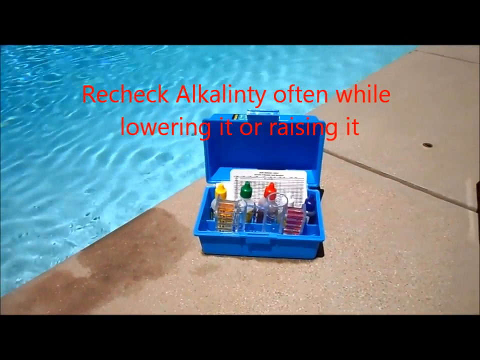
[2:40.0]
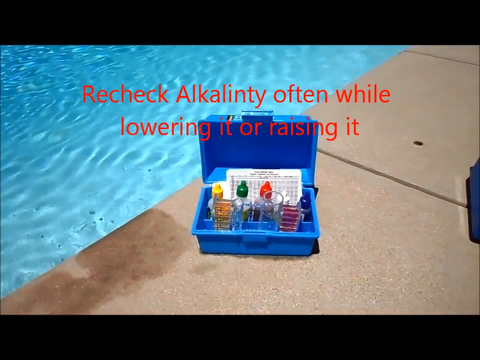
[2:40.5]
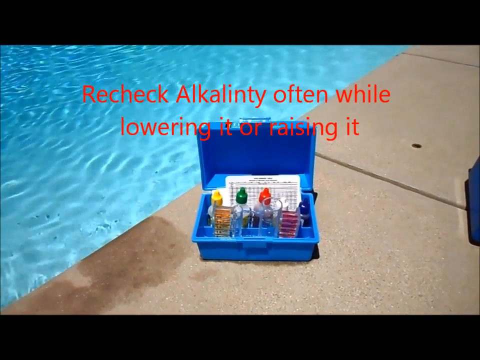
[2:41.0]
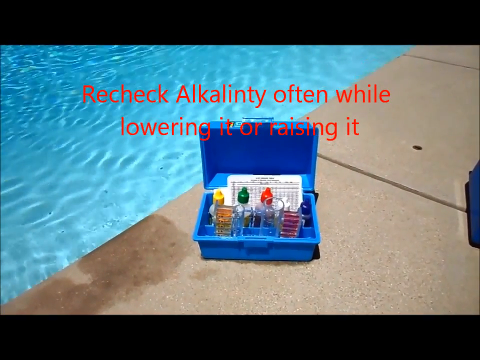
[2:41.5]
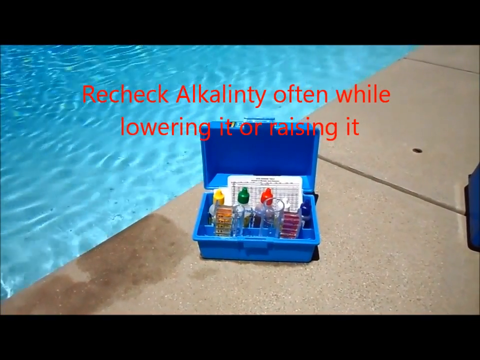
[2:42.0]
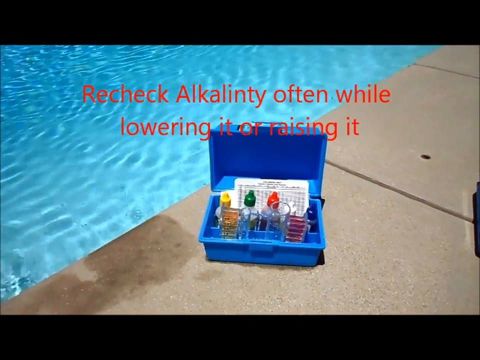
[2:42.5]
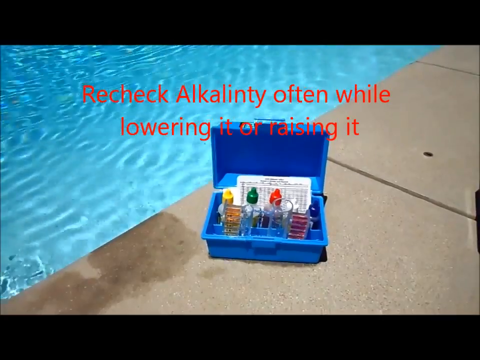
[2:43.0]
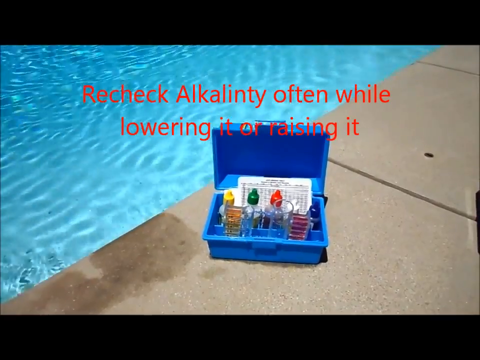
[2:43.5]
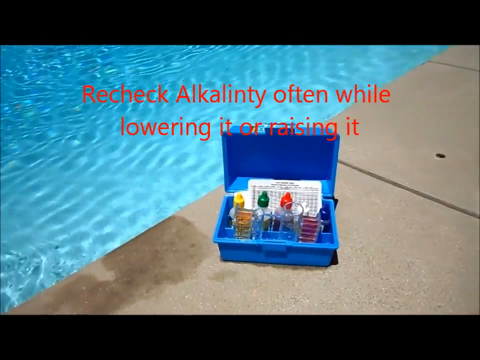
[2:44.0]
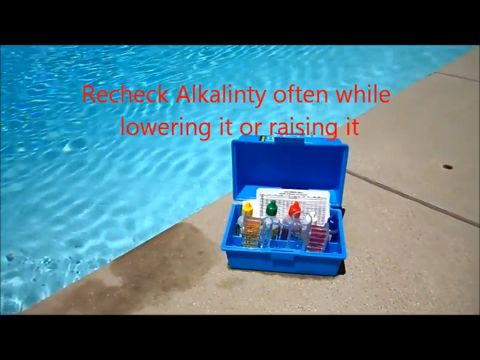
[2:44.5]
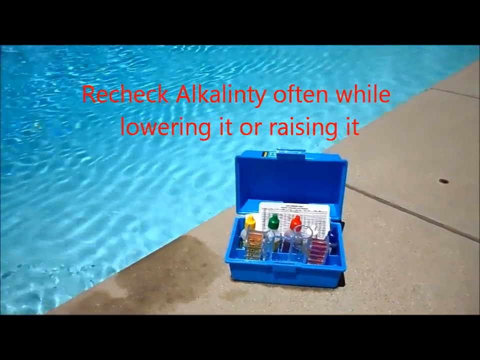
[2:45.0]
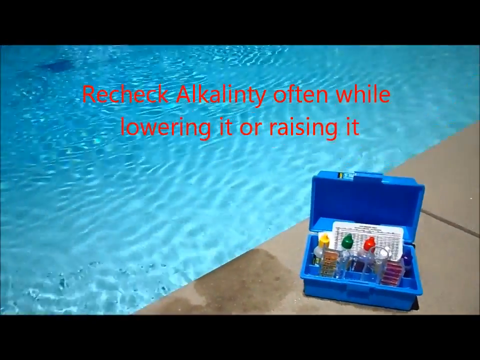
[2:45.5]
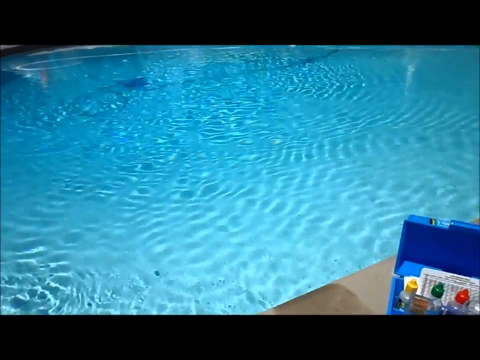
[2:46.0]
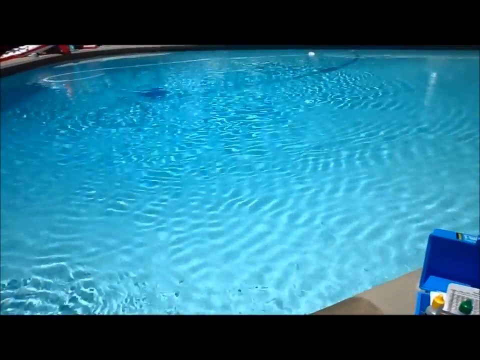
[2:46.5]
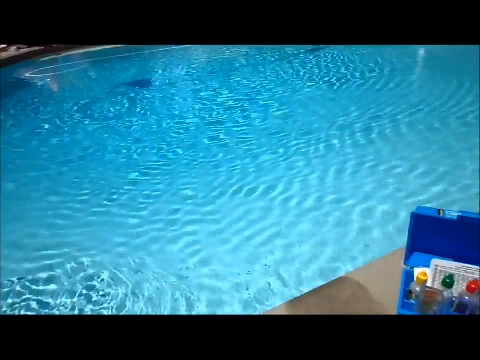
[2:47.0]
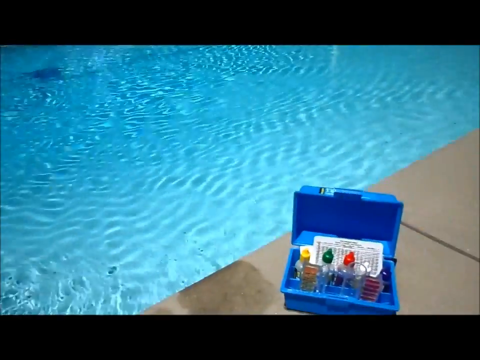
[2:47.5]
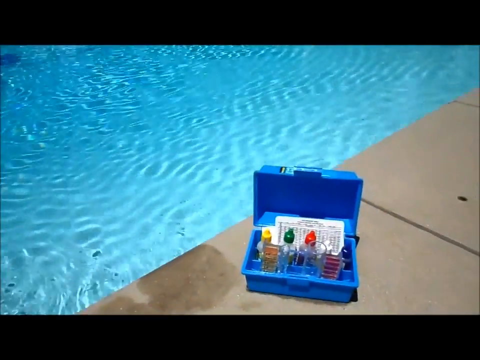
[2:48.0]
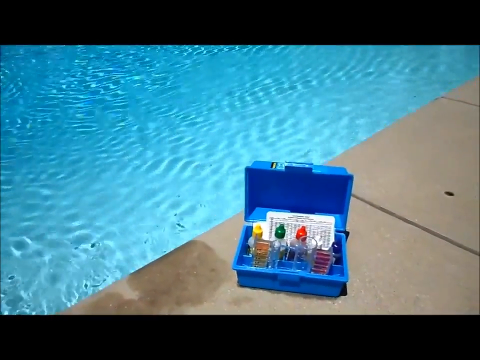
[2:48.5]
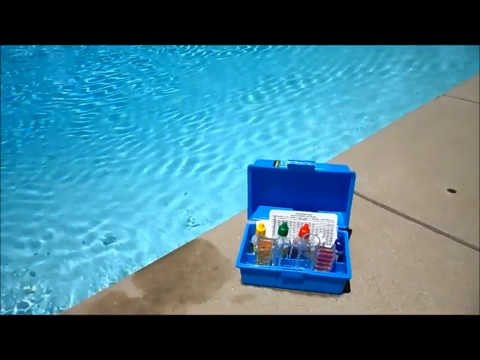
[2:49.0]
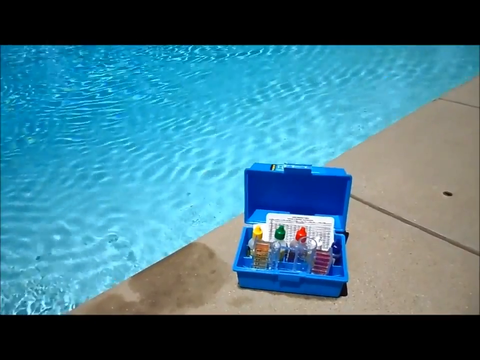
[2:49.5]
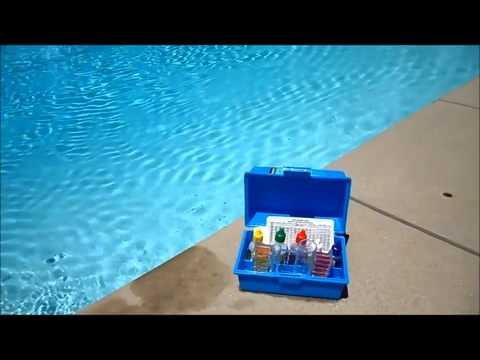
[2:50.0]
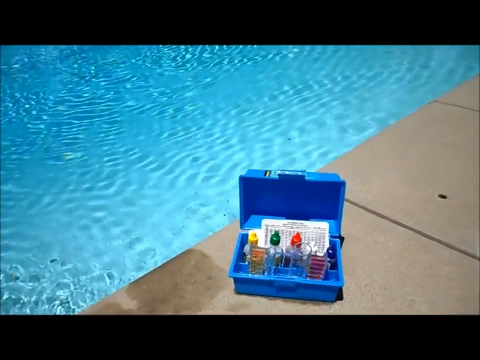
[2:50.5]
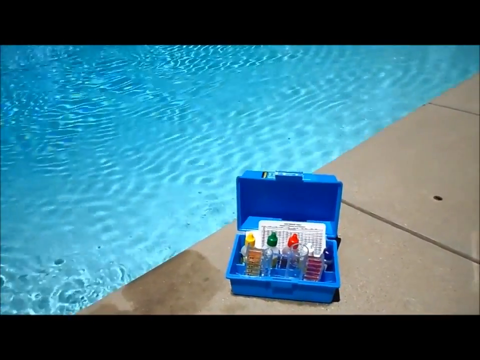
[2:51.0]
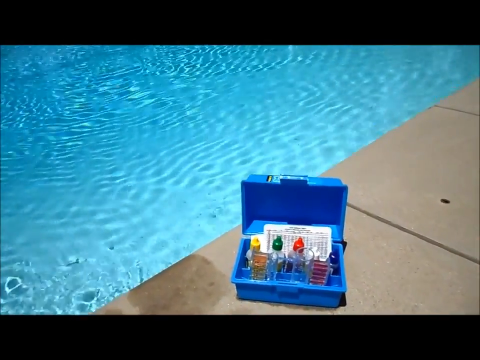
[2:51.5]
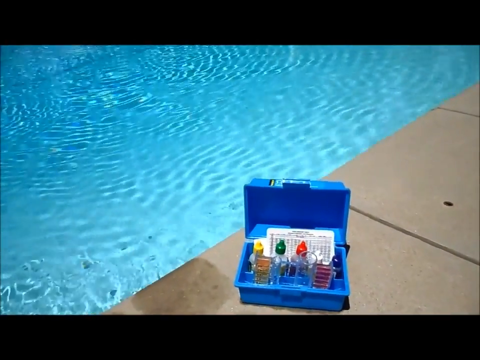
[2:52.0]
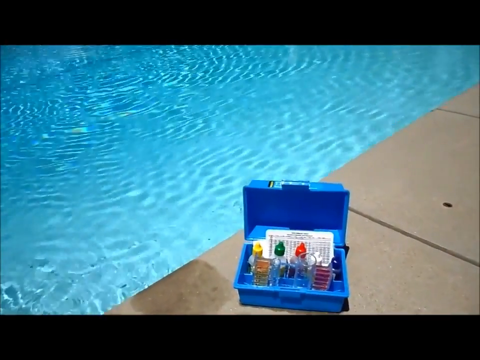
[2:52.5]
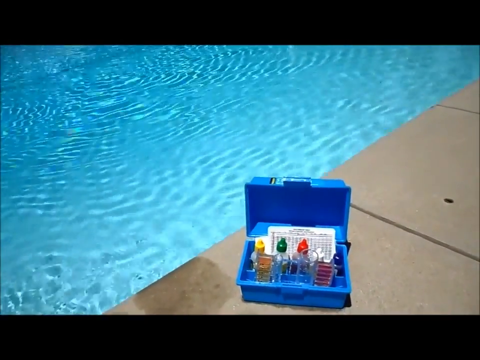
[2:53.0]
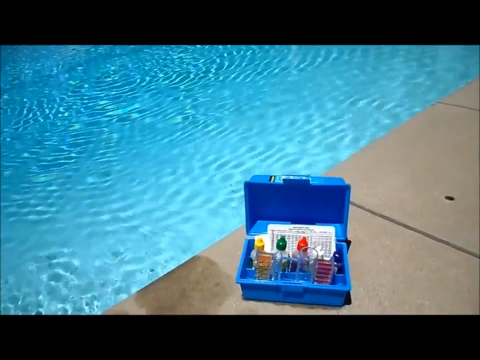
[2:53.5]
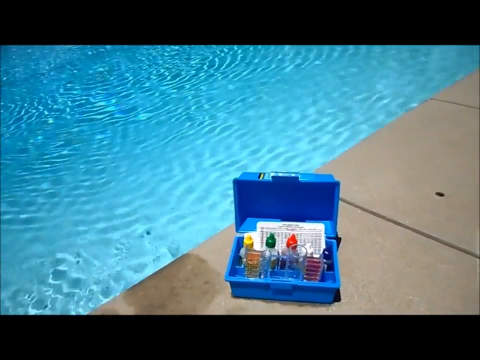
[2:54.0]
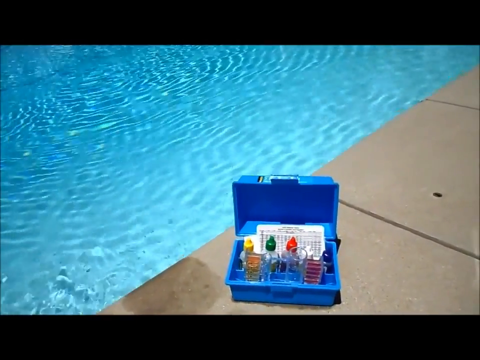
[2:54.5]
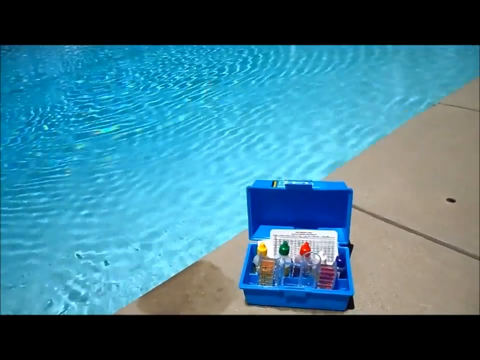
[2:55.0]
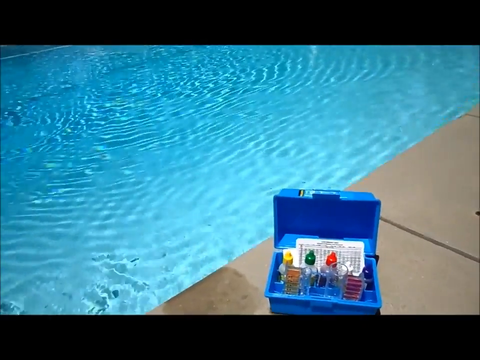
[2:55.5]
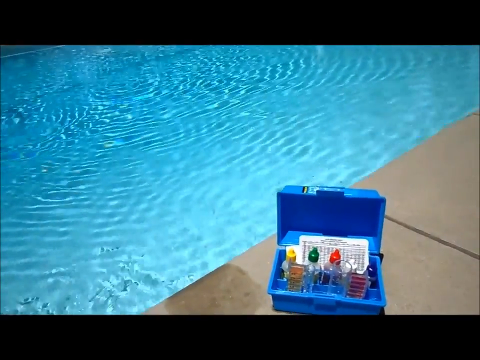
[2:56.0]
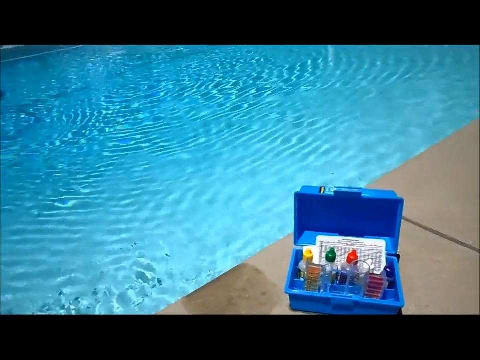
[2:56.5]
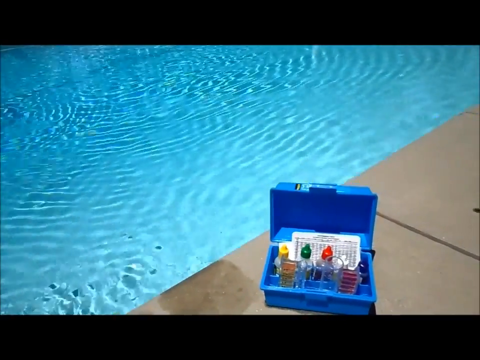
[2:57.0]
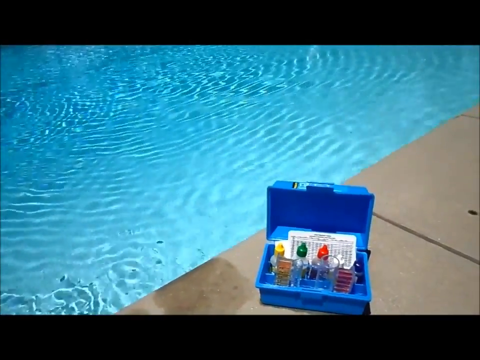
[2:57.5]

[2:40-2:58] The blue box with all the different chemicals in it is shown, with red words on the screen saying to recheck alkalinity often while lowering or raising it. The camera pans off to the left, showing a little more of the pool and briefly the hose, then comes back to the blue box. The box is next to the pool, and there are signs of water up on the deck. The open box holds what look like four bottles, with yellow, green, red and white caps. Behind the bottles is a card, likely with information on it, and there also looks to be some type of clear tube in front of one of the front bottles. There is a black dot on the ground to the right of the bottle, and the lines on the outside are visible.